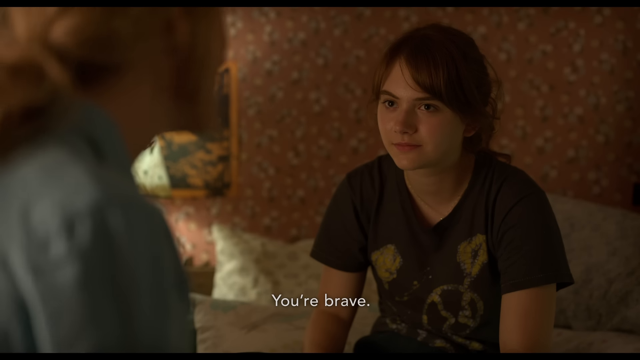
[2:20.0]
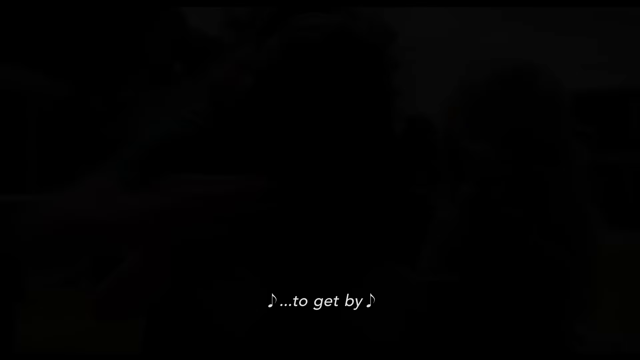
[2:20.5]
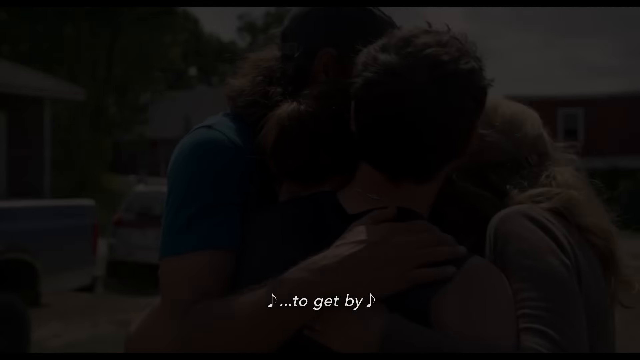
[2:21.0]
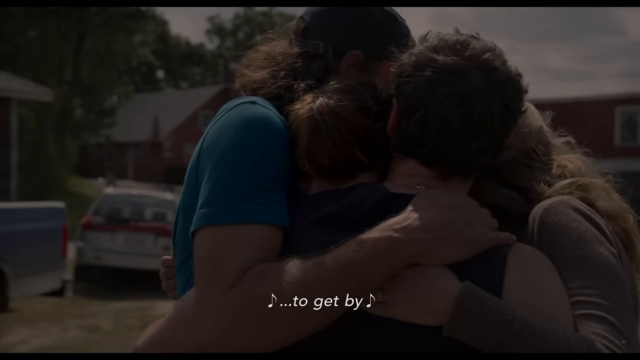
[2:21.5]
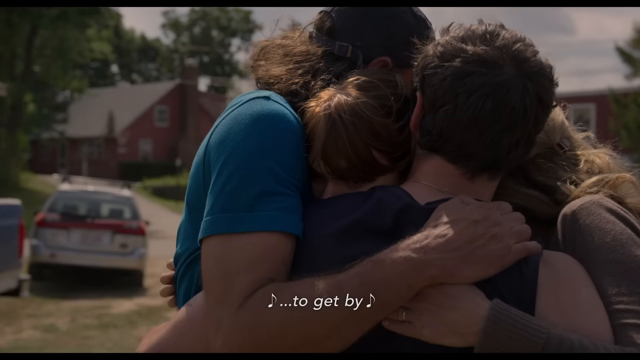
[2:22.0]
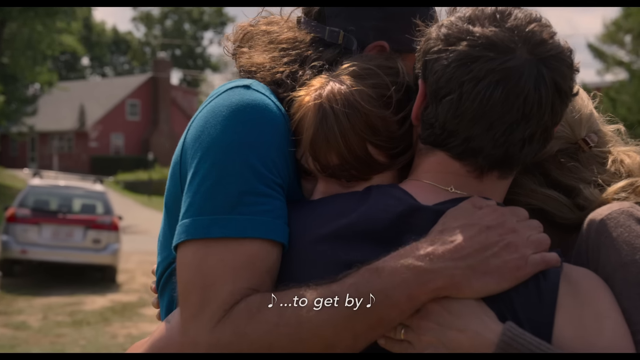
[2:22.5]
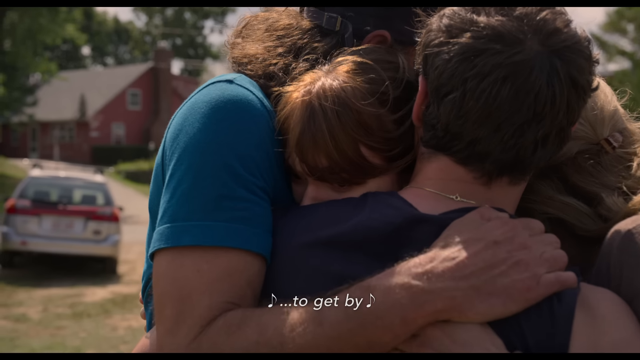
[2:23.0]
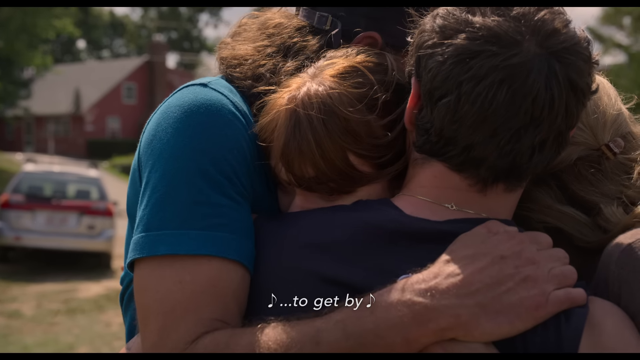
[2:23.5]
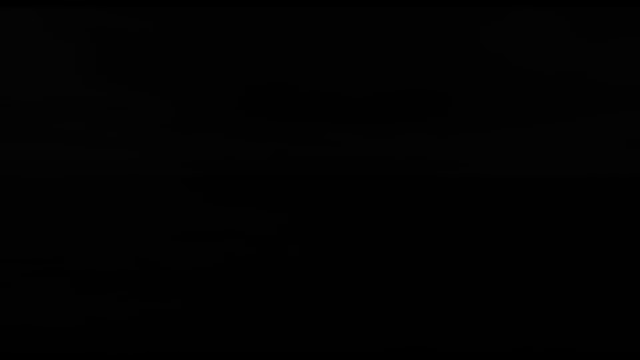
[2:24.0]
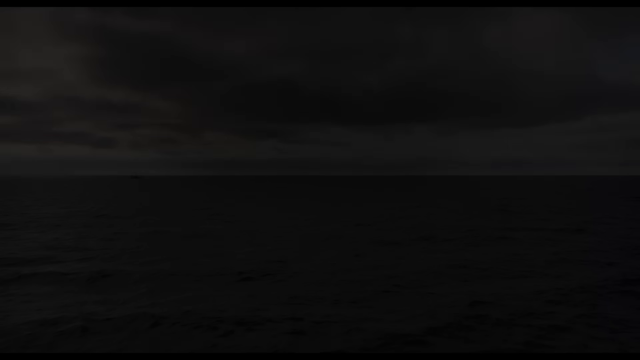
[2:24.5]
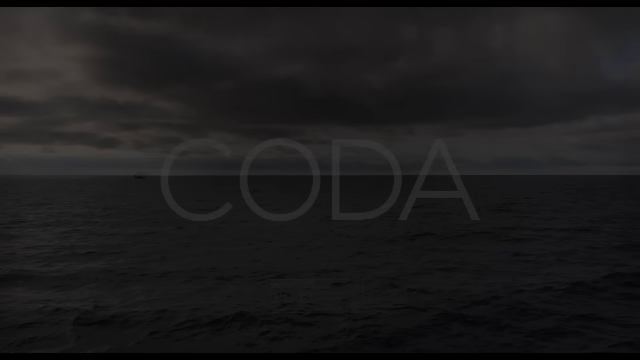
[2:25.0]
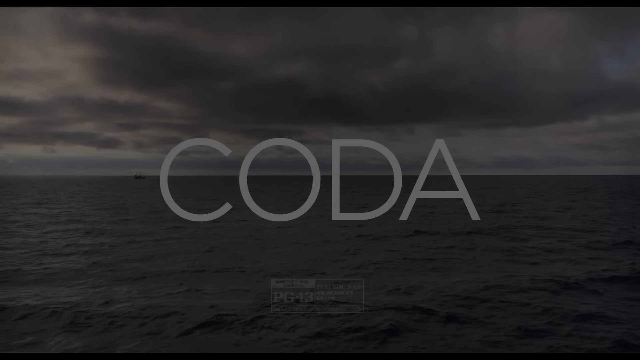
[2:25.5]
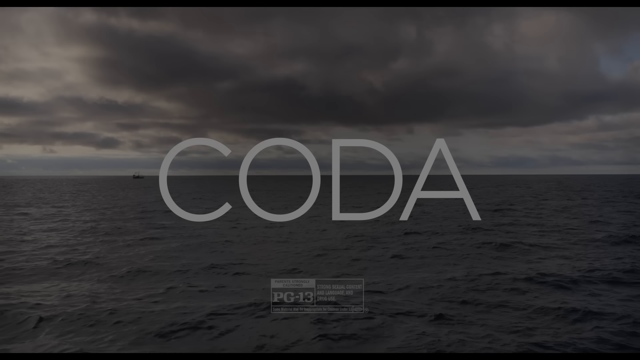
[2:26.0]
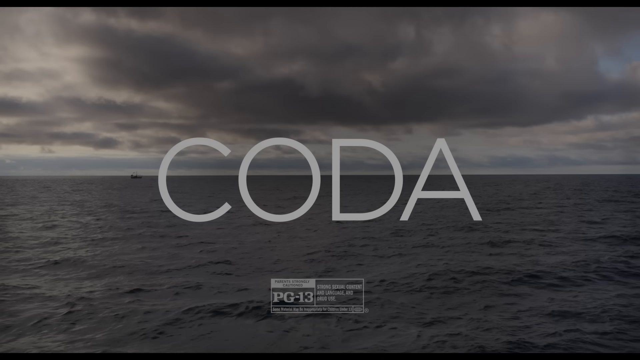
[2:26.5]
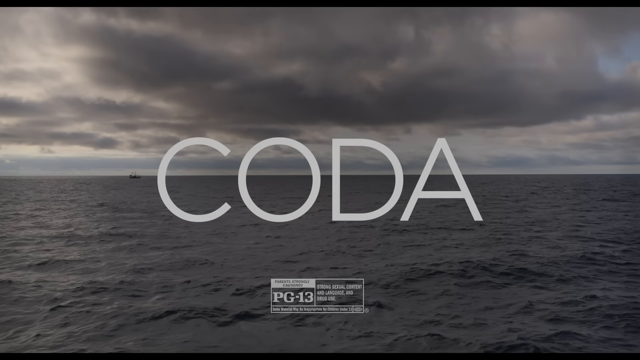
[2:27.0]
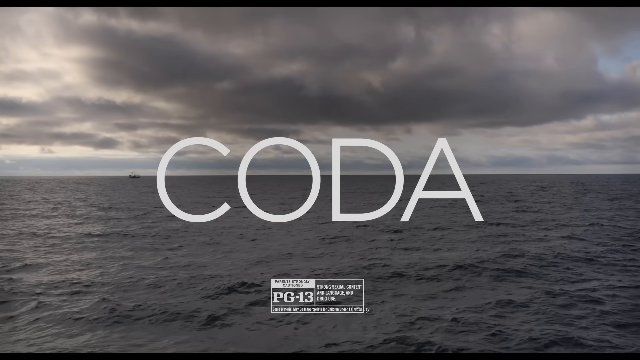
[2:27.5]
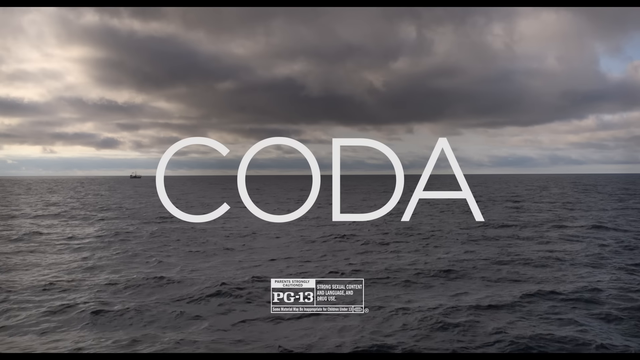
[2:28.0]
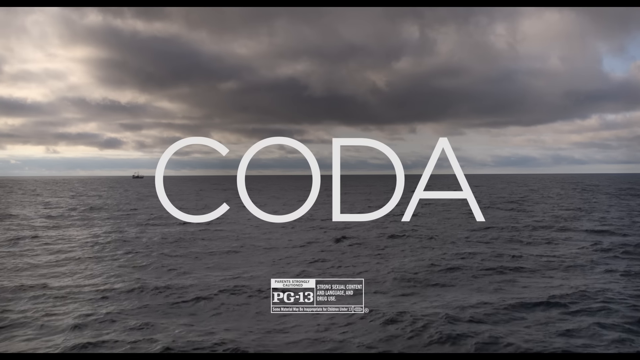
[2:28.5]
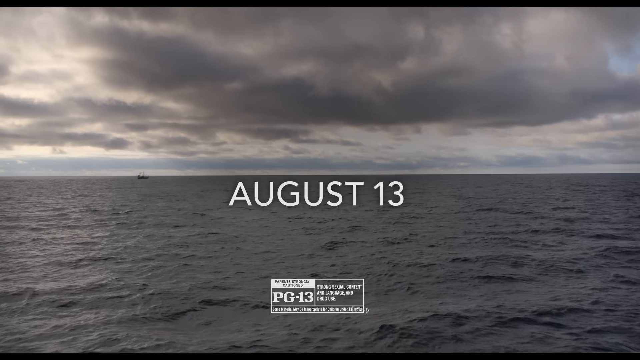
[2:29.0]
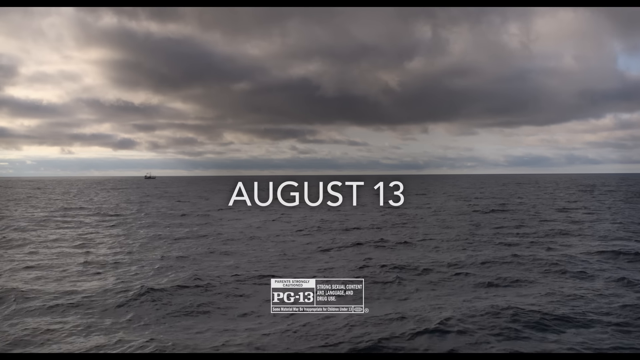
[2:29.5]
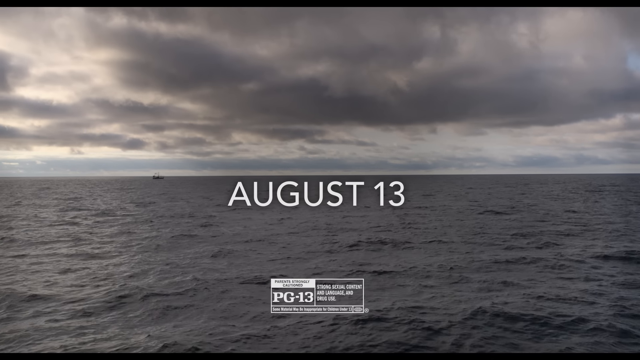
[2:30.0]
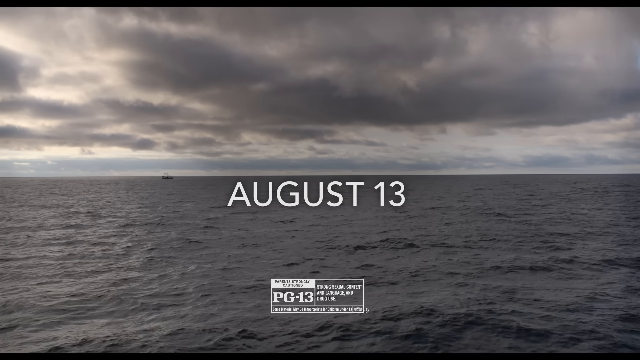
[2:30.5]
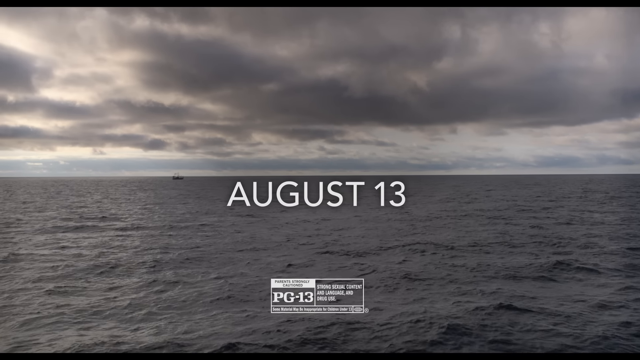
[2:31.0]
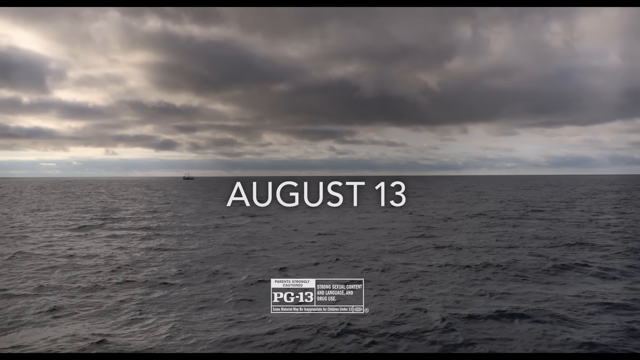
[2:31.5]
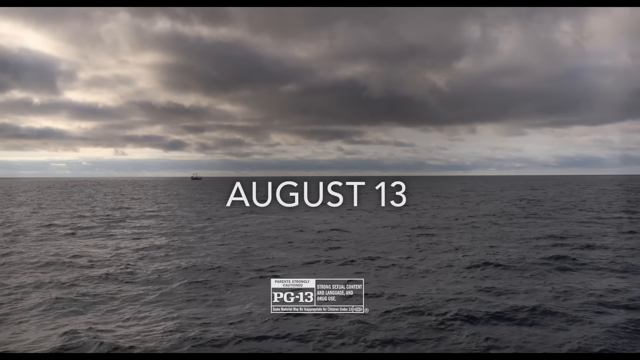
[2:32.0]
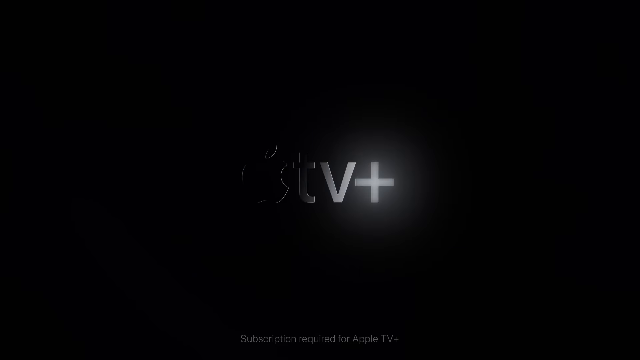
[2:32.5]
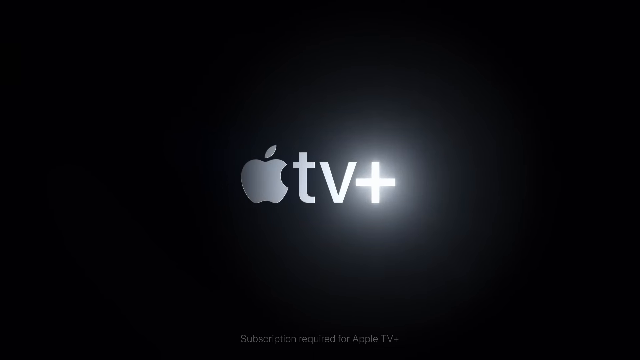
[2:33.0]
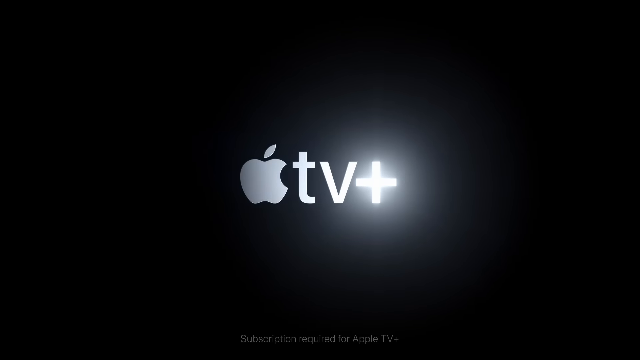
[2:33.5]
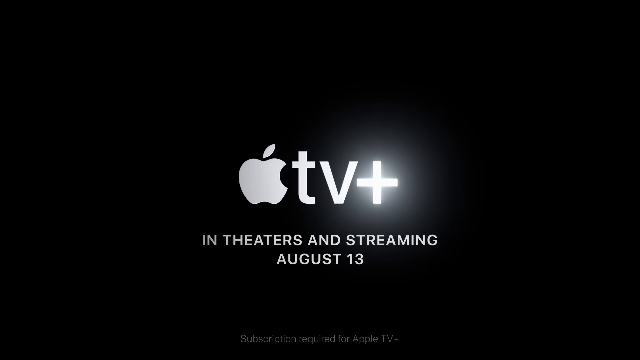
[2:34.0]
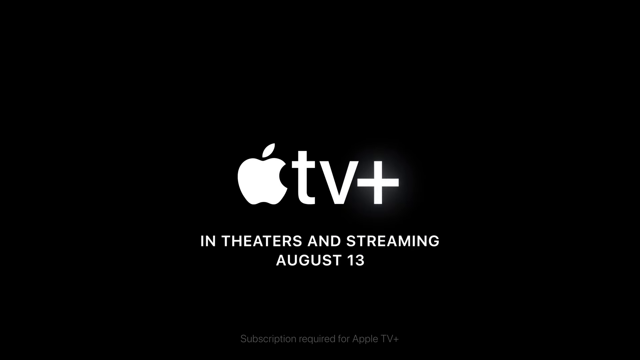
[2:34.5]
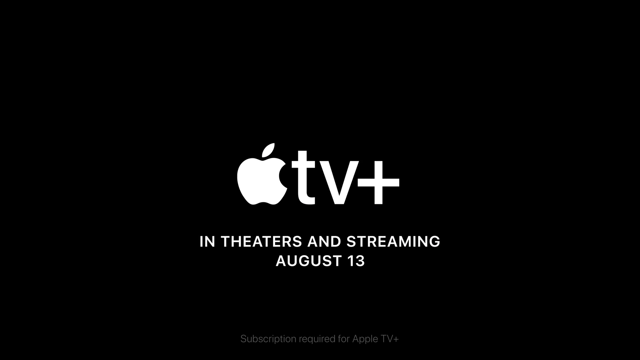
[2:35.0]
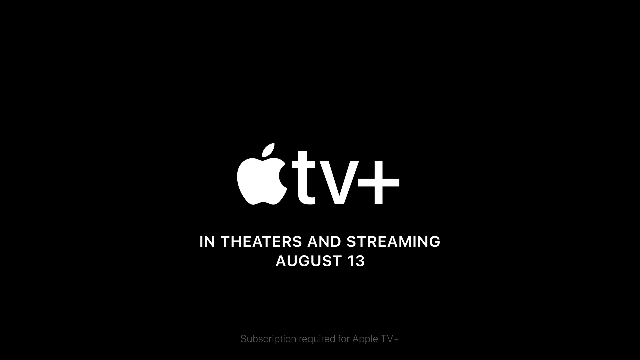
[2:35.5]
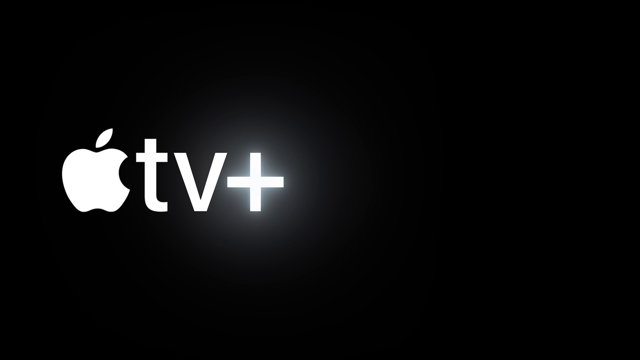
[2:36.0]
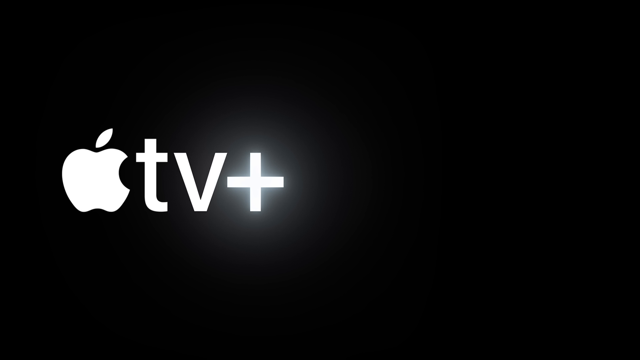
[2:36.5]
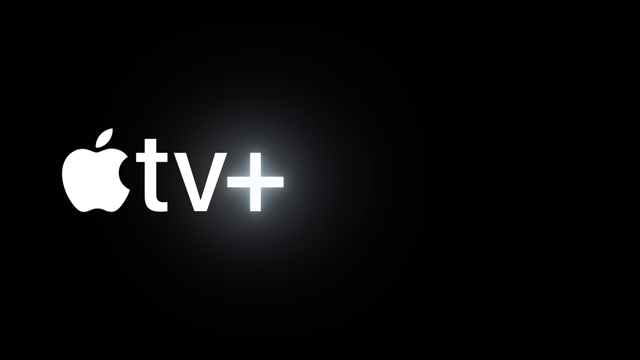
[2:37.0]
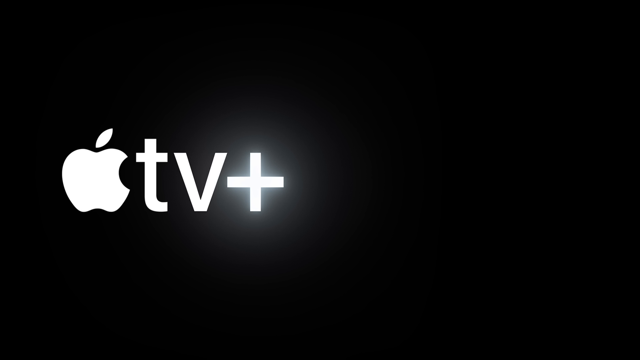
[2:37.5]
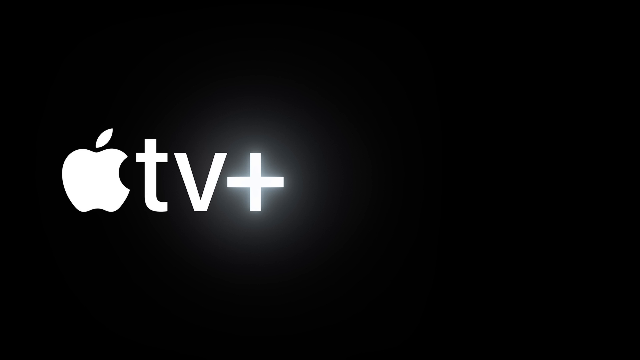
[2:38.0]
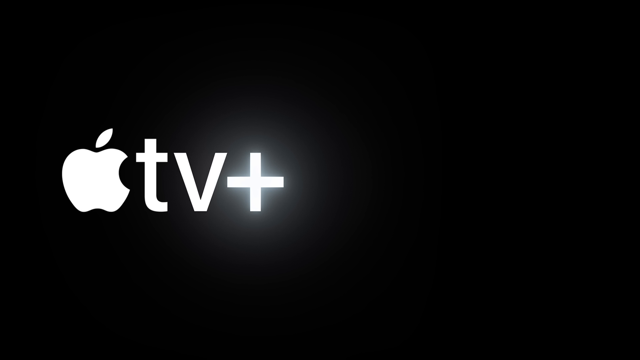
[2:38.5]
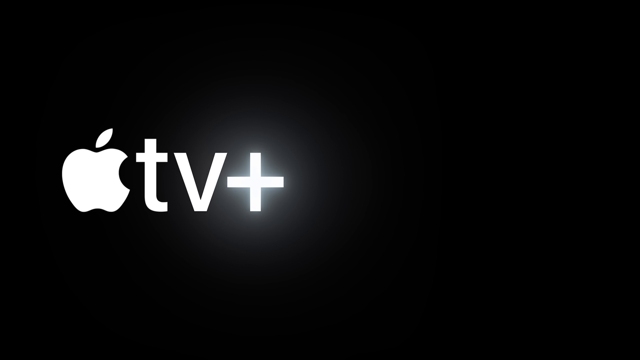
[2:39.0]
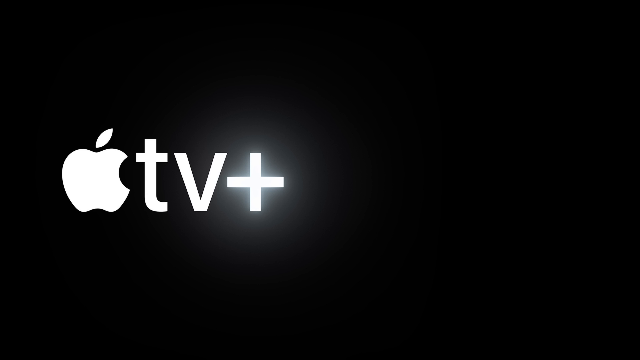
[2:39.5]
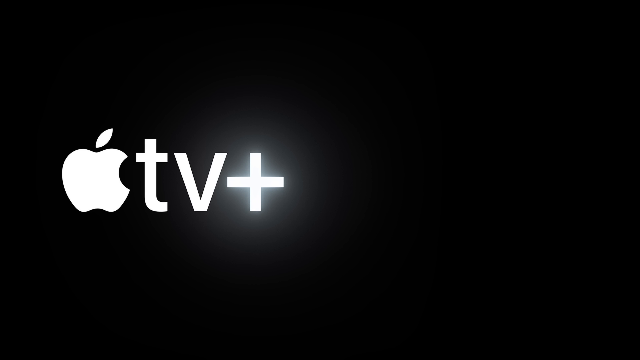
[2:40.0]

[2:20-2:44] What looks like four people hug on a dirt road. The scene switches to open waters under a partially overcast sky, and "Coda" pops up, with a small white ratings box at the bottom reading "PG-13." The "Coda" disappears and "August 13" appears. The camera pans gently to the left as clouds move to the right. That screen disappears, followed by a black screen showing an Apple logo, then "TV Plus," and below that text saying "streaming August 13." The scene switches again to the Apple TV logo with a plus sign on the left side of the screen; the plus sign glows, and the screen lingers until the end of the video.